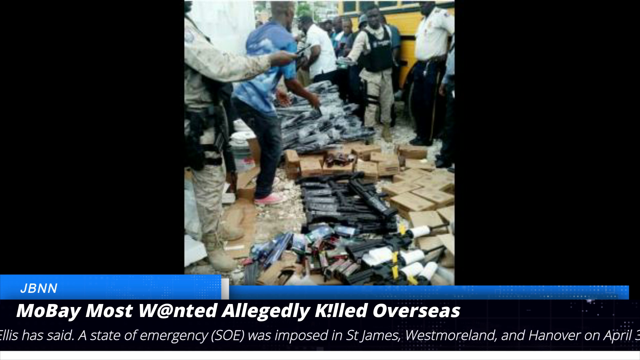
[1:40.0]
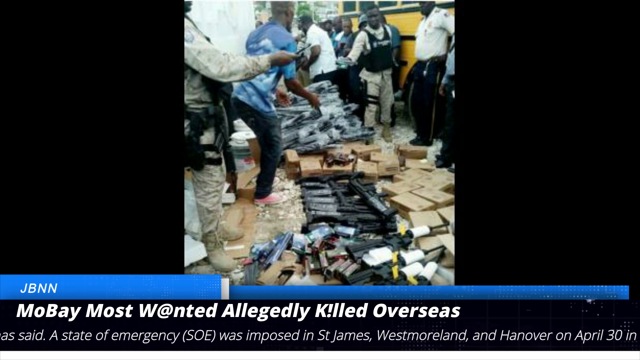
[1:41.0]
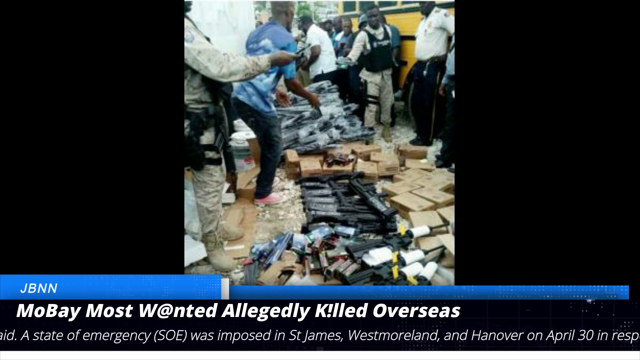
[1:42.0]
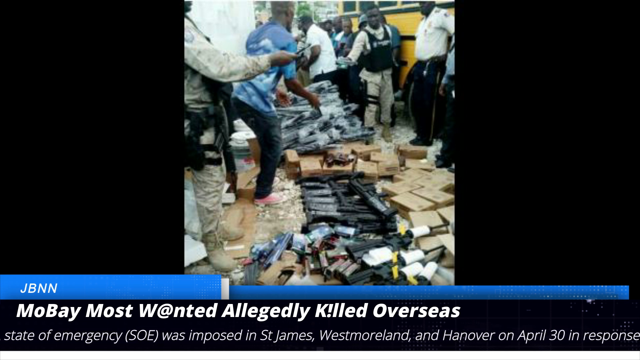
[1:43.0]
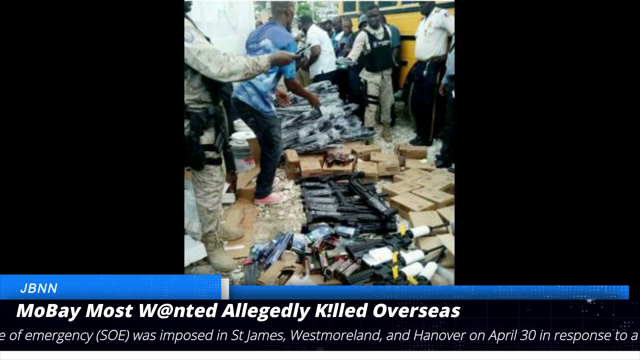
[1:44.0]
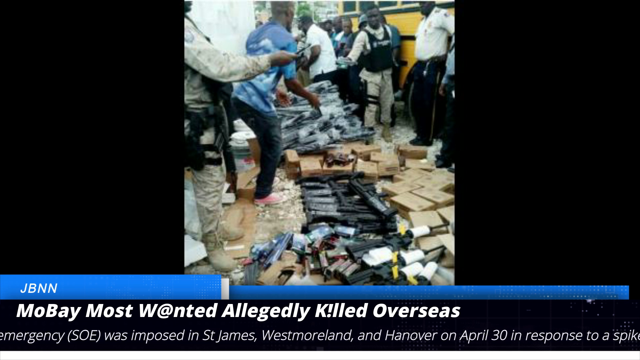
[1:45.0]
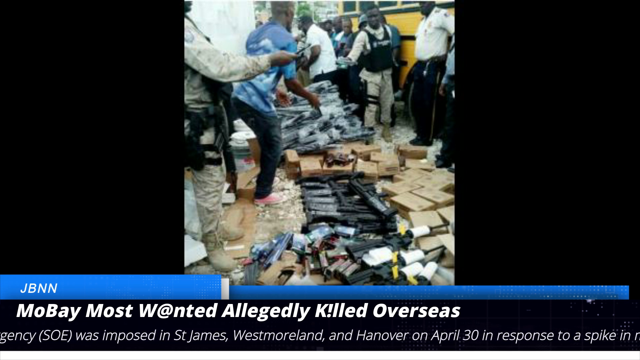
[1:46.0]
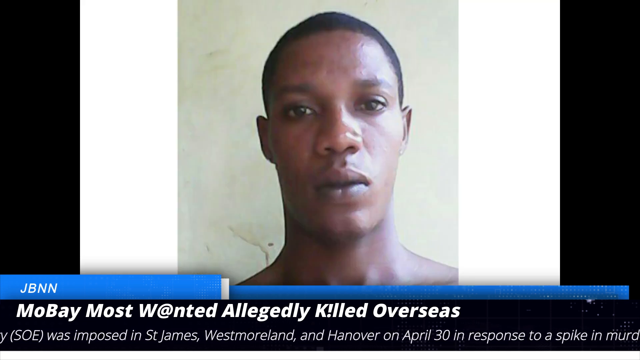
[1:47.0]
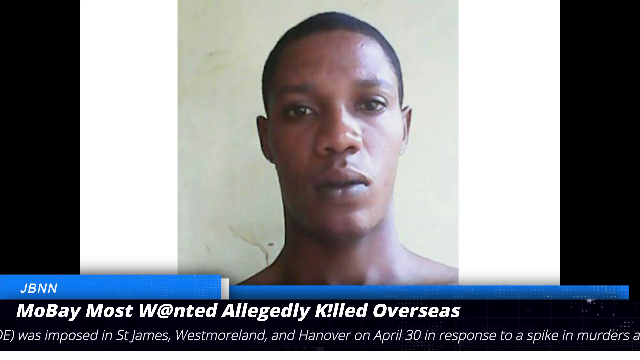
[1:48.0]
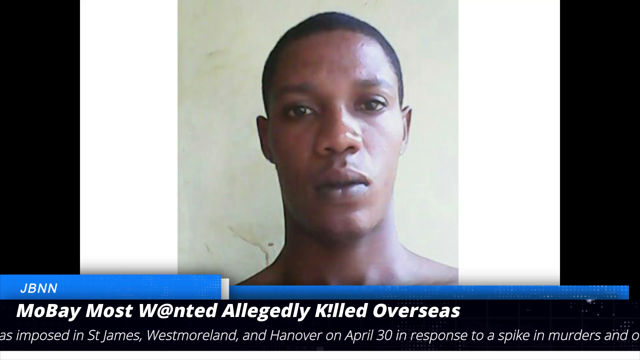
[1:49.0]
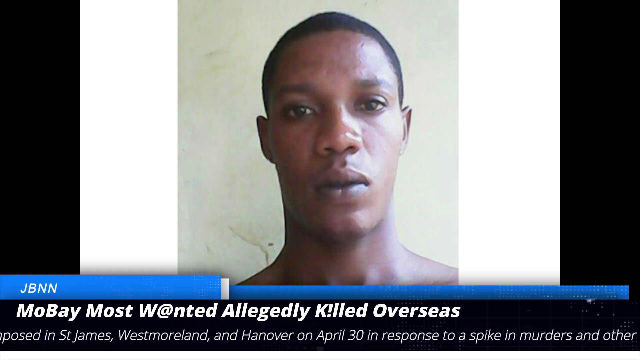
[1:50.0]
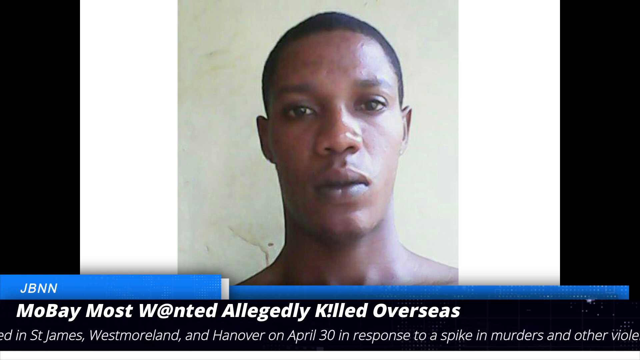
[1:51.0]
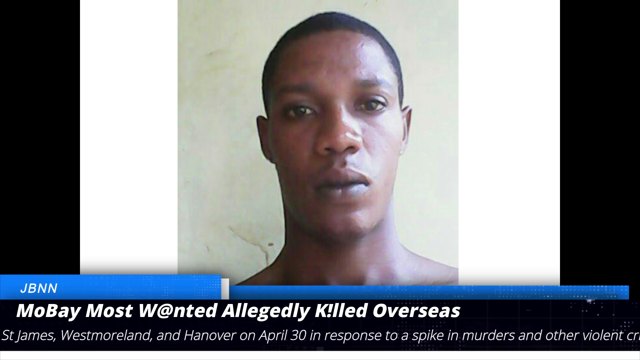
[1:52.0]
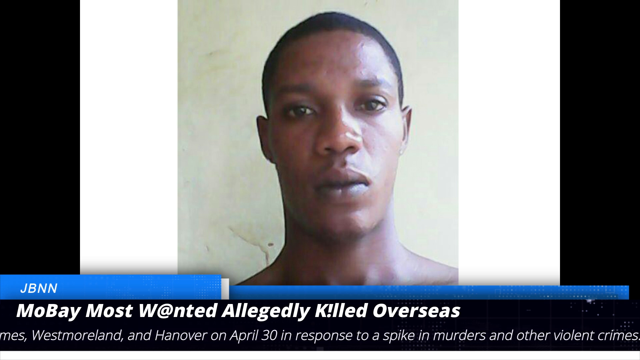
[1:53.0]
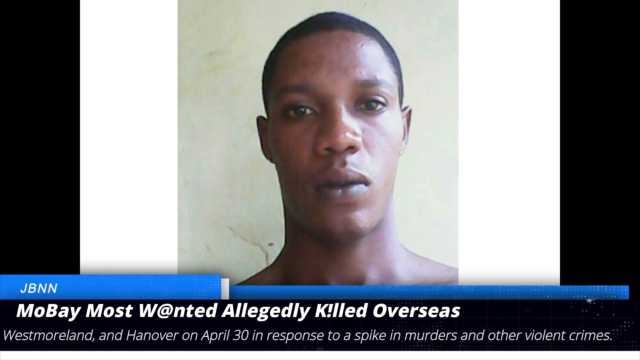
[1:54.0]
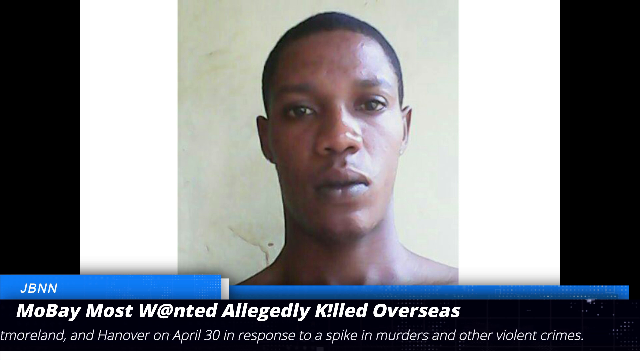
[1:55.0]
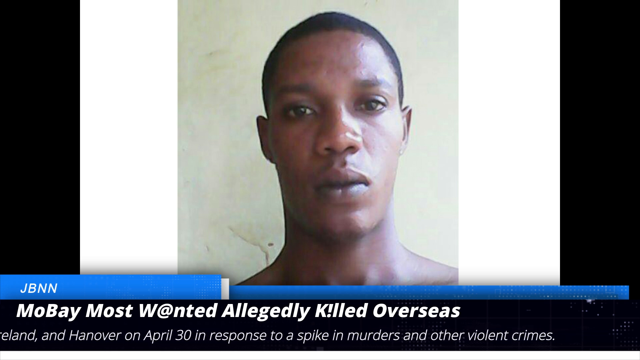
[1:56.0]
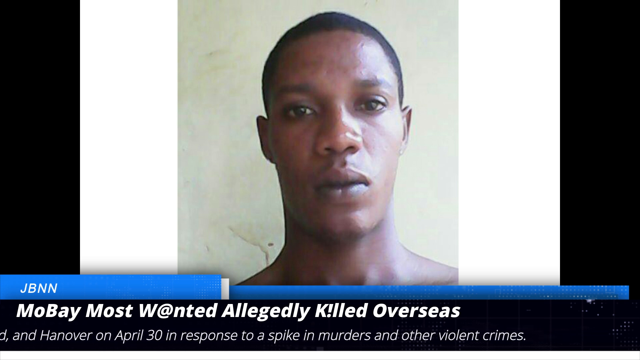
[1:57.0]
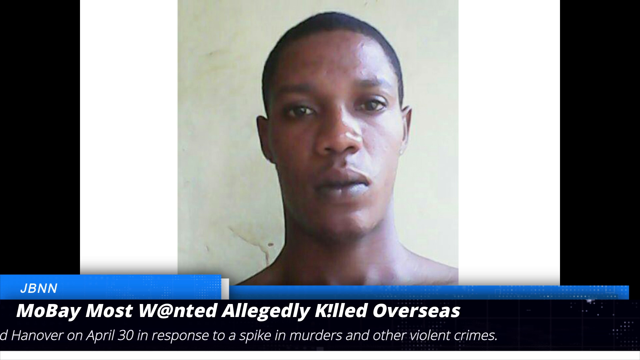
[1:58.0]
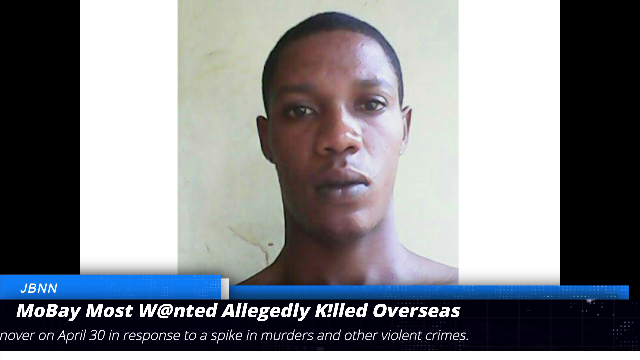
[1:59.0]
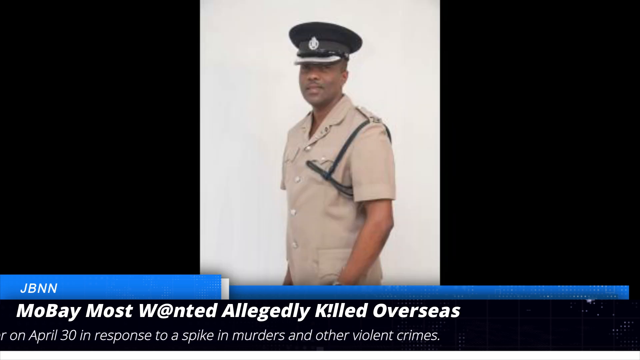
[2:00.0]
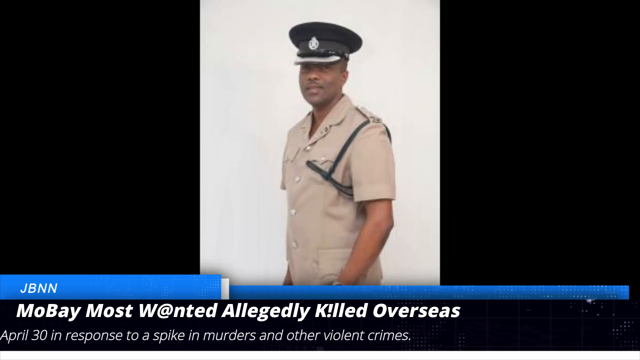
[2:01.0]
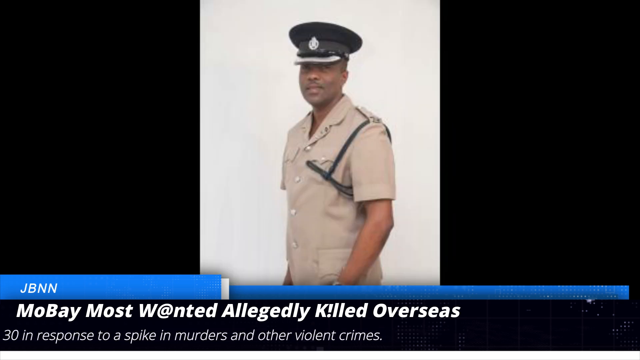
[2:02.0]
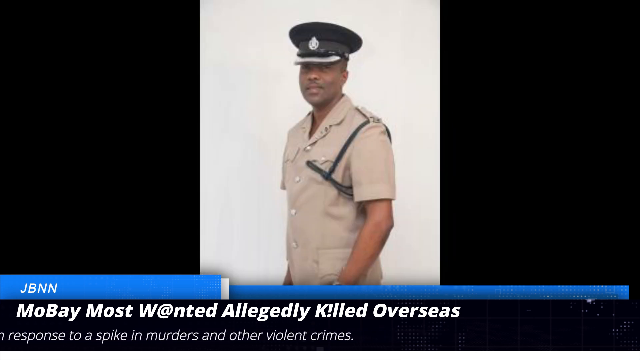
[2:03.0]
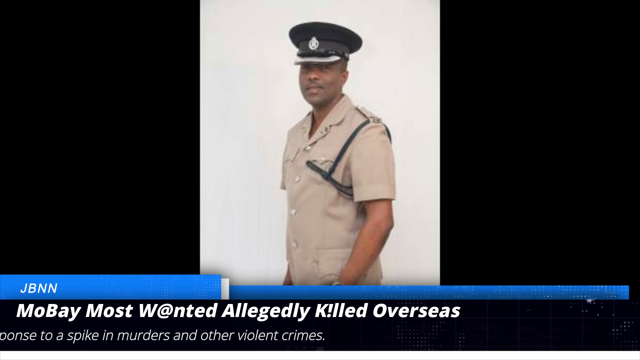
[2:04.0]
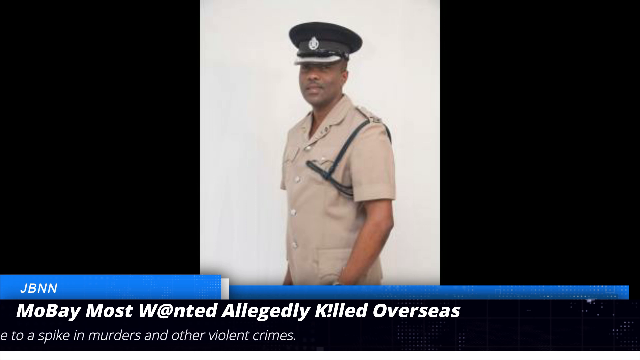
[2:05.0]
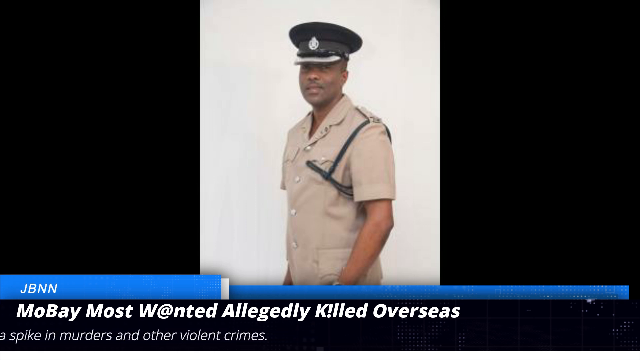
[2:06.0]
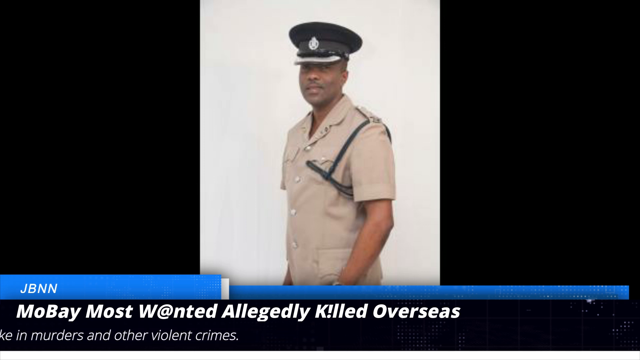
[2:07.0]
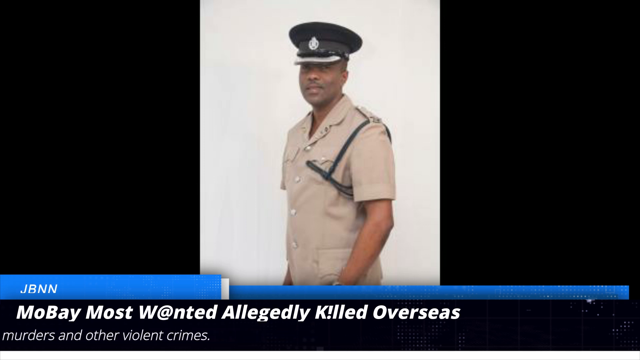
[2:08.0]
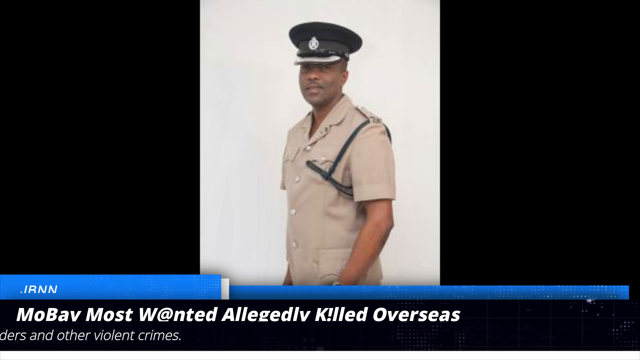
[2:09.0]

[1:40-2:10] A picture in the very center has thick letterboxing on the left and right, so only maybe 40% of the width is the picture. Items are laid out in groups: boxes about the size of shoe boxes on the right and top, and black cylinders, possibly weapons, clustered on the left-hand side. A group of people is all around them, many in police or military uniforms, but not all; there are probably 10 or so people in total. A yellow school bus is in the upper right. The video then switches to a static image of a young black man with a buzz cut, showing just his head and neck; he looks at the camera with a completely neutral expression and appears to be in his 20s. That stays on screen for a while before switching to another static image of a middle-aged man in a military uniform facing roughly toward the camera.